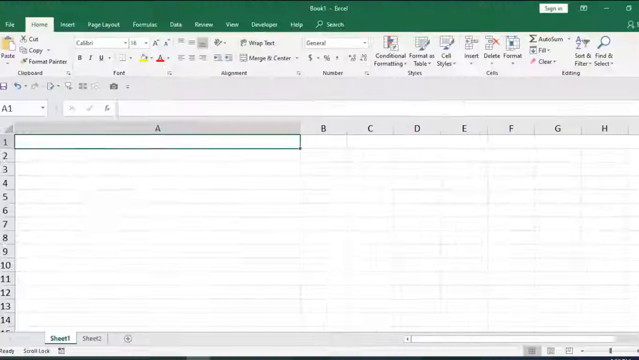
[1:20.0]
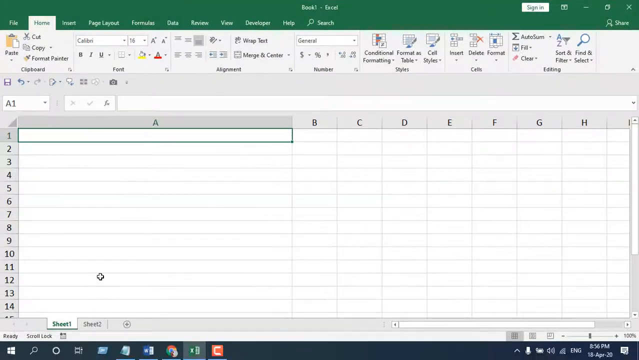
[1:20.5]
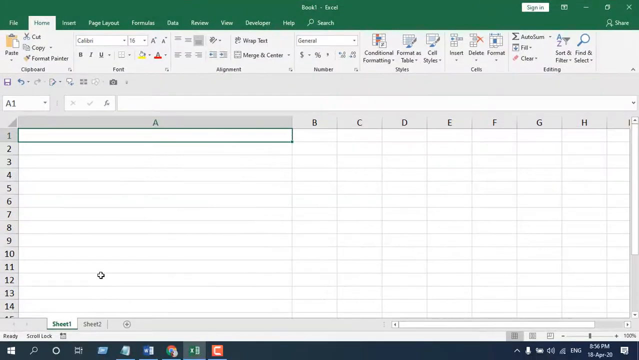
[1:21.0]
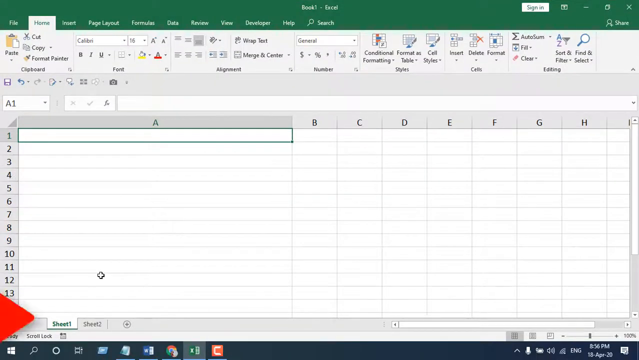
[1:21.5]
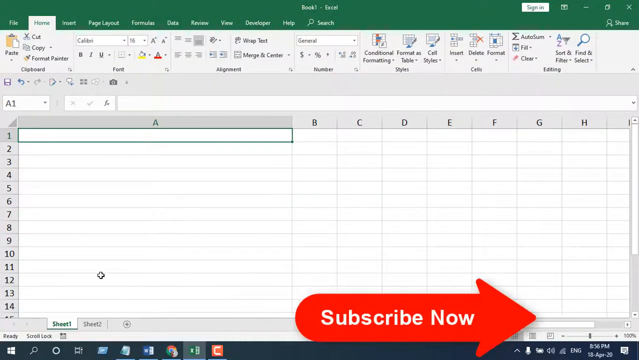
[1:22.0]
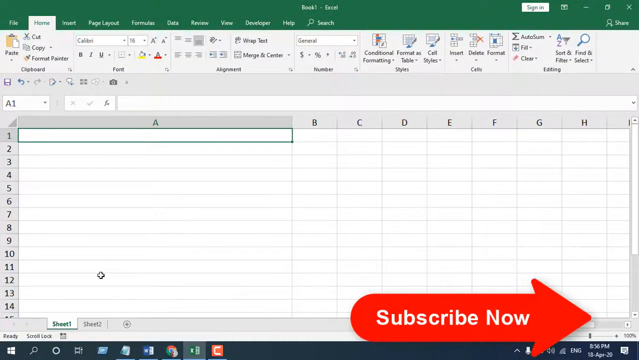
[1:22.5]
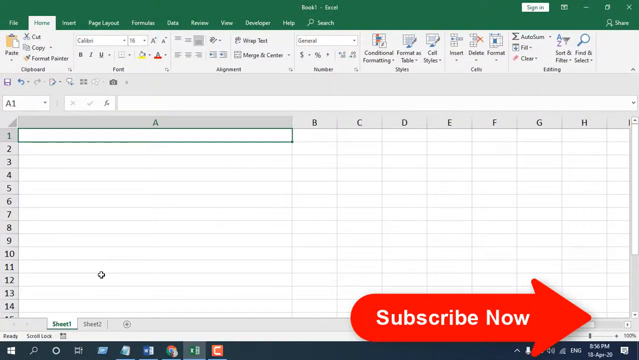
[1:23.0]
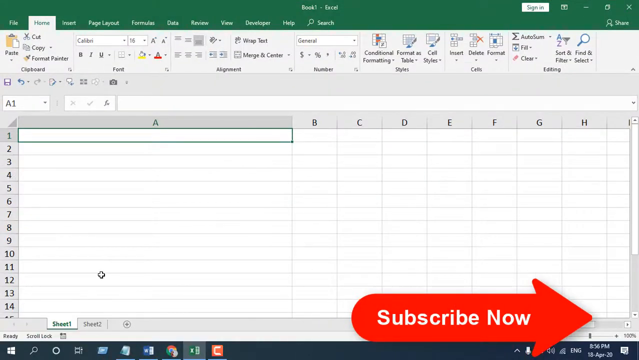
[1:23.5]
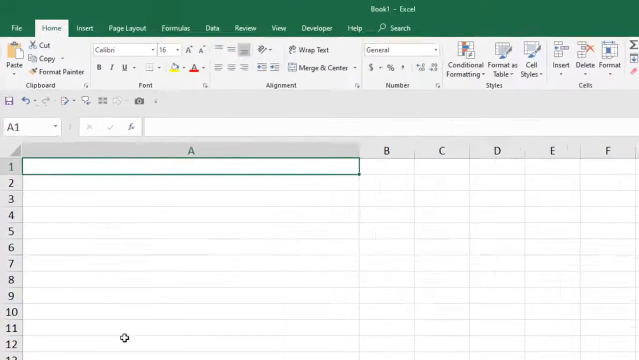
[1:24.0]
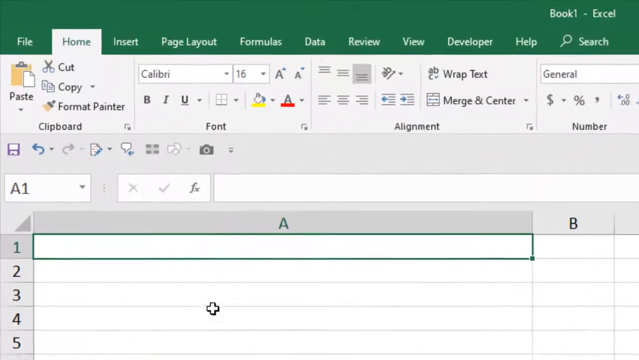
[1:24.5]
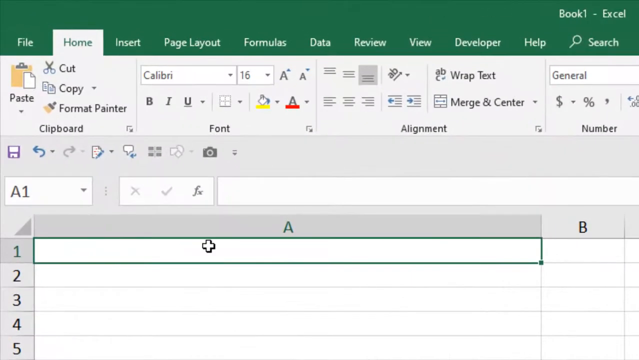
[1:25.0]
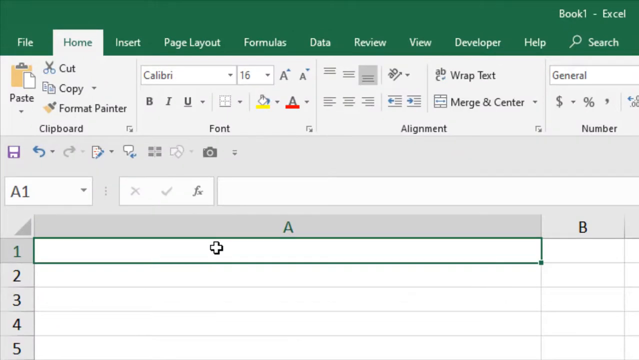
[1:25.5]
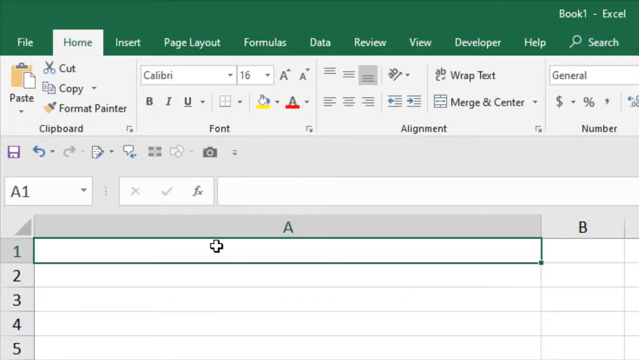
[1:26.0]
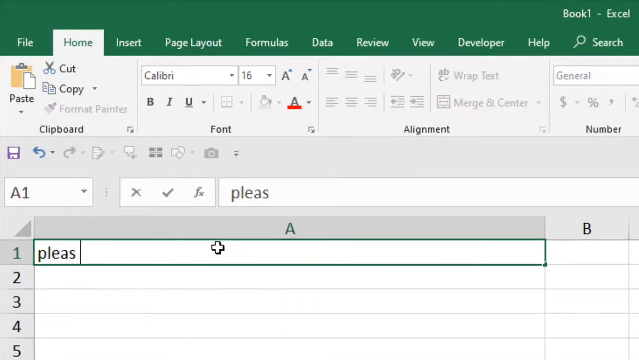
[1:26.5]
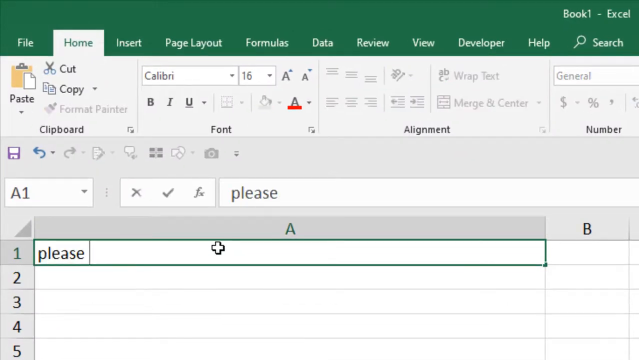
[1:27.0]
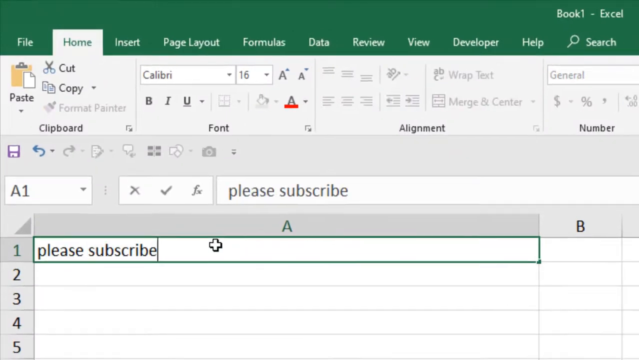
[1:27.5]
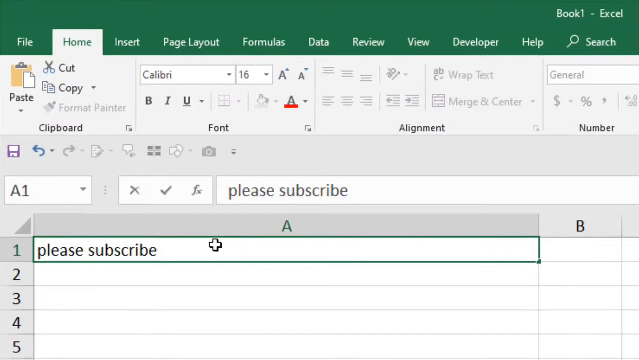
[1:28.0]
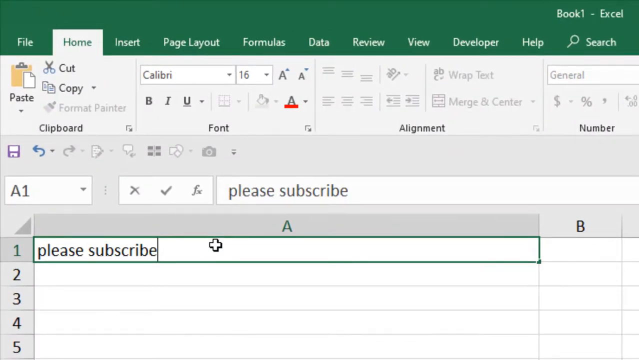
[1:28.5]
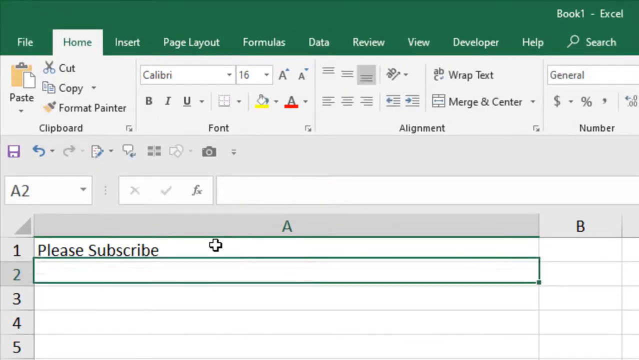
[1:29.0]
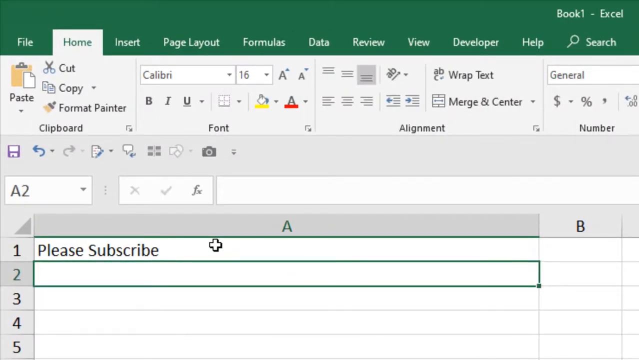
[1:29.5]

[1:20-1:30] The view leaves the code and appears to blink back. At the top right, the X for closing is highlighted in red with a box around it. At the bottom, an animated arrow appears from the left and moves right, reading "subscribe now". It stops for about two seconds, then moves right off the screen. The view zooms in again with the plus-sign cursor, and "please subscribe" is typed in lowercase into cell A1. The selection moves down to A2, which is empty and has a green border.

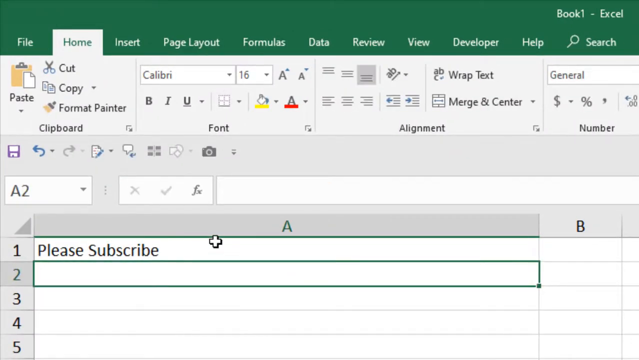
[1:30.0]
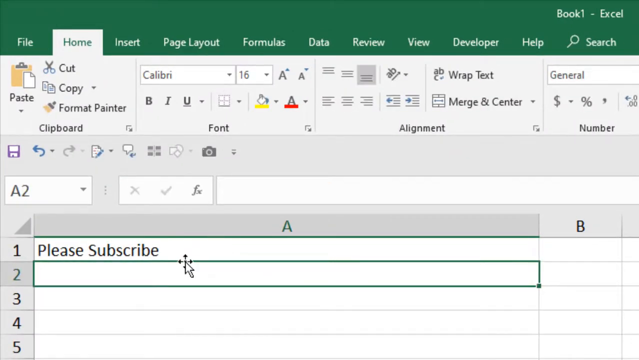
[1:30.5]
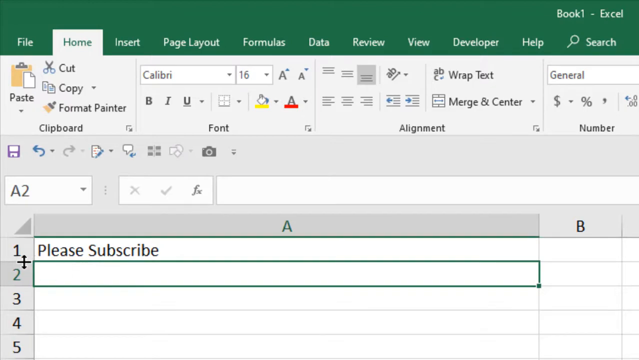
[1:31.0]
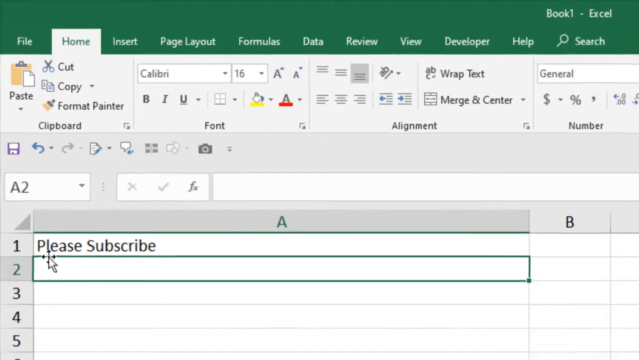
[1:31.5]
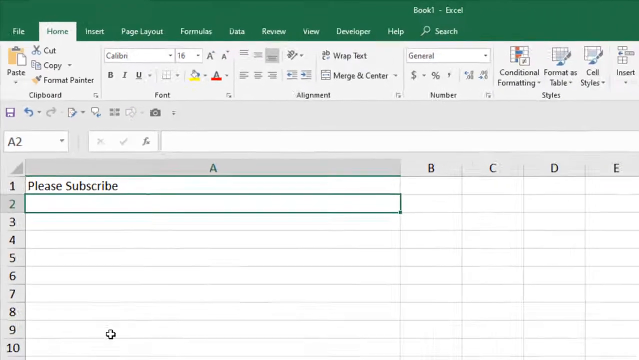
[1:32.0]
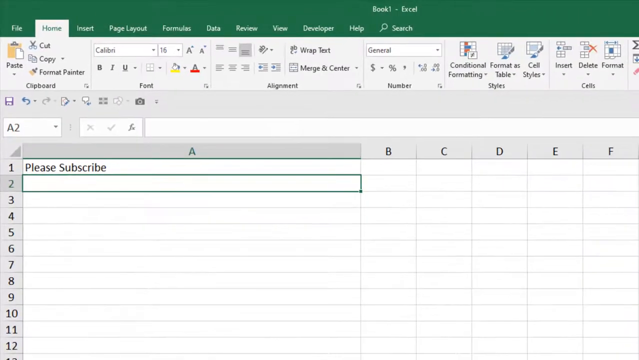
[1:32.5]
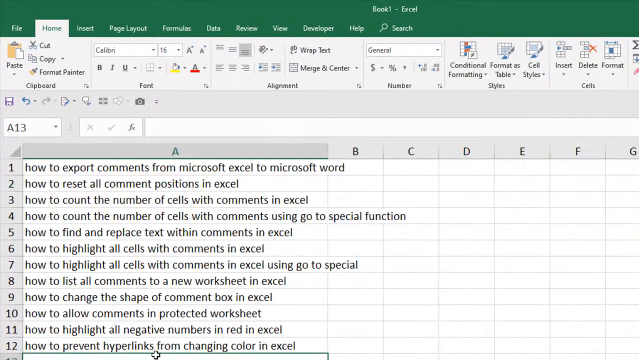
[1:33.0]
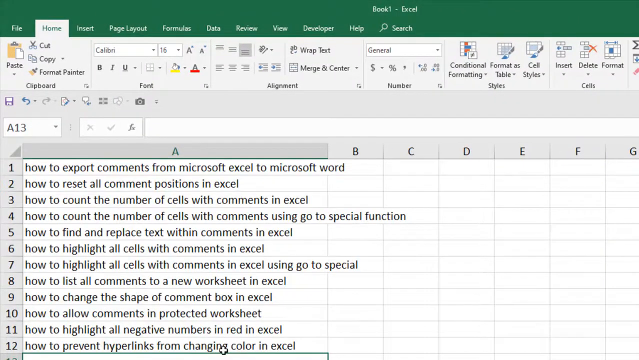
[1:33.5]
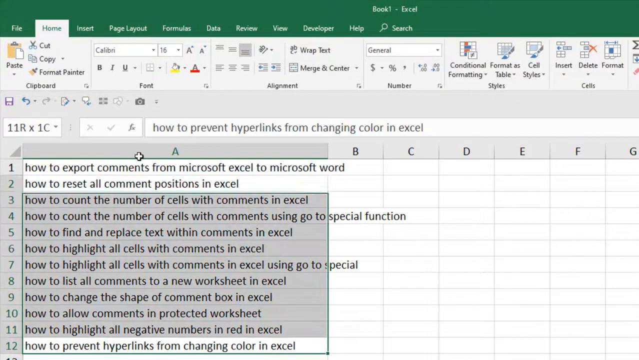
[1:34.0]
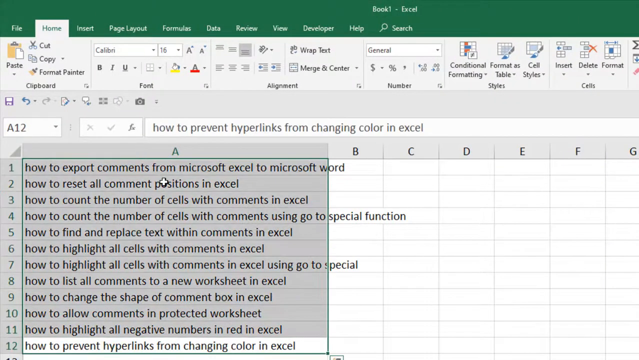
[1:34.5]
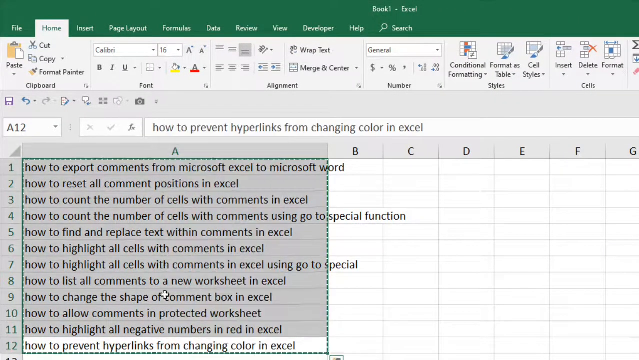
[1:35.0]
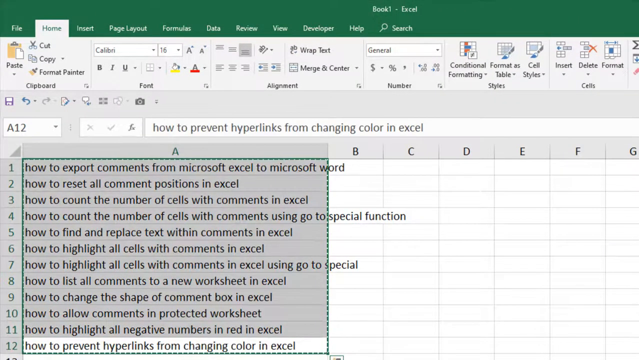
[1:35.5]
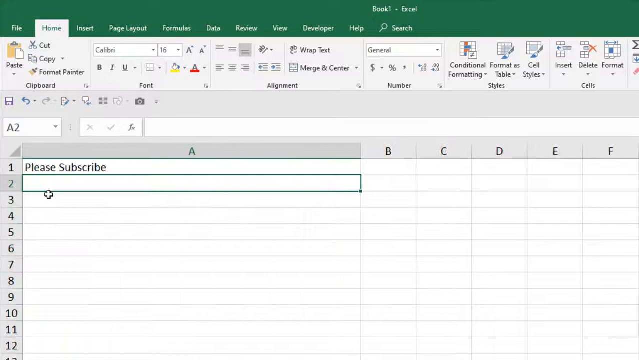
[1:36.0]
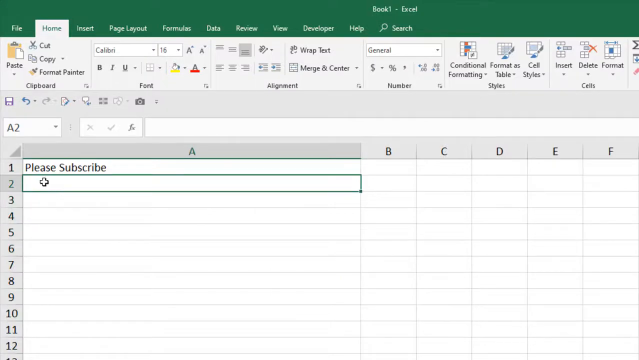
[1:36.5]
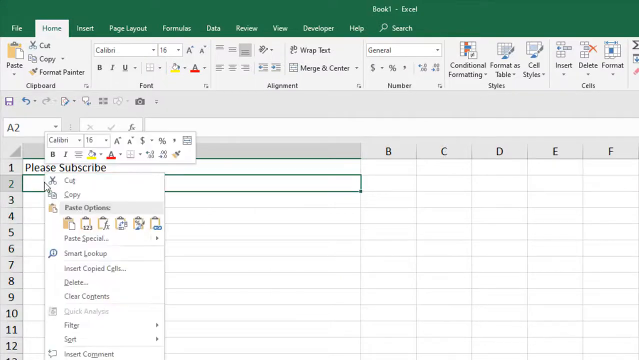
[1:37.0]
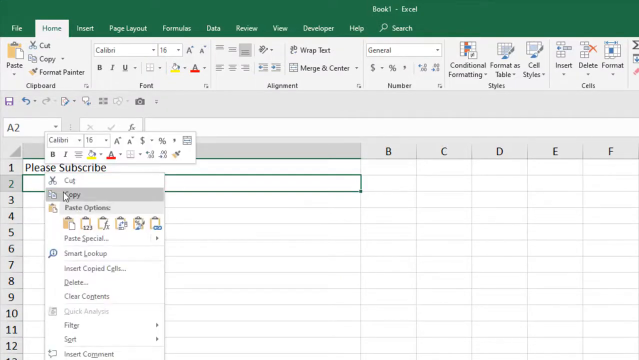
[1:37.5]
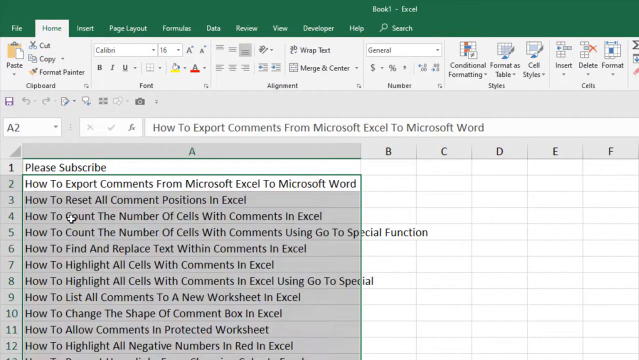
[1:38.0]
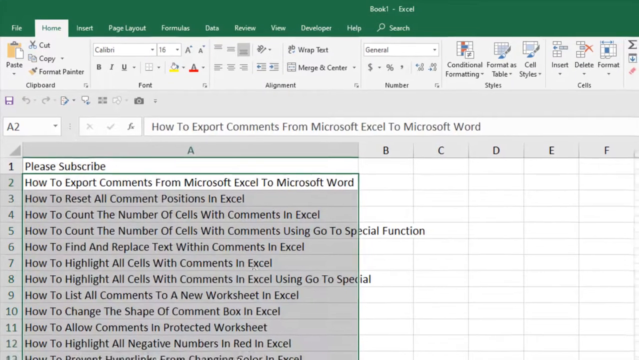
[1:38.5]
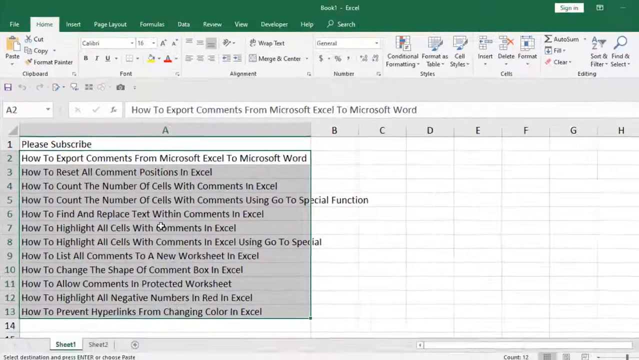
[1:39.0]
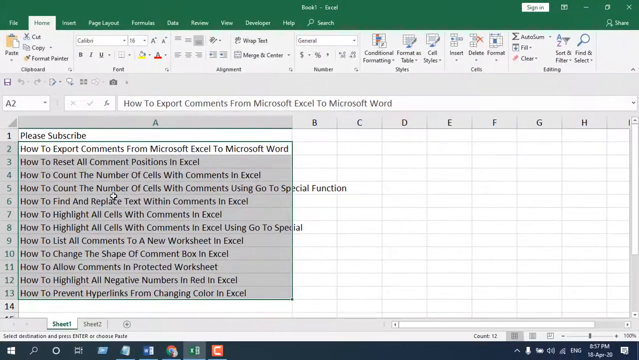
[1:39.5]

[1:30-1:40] Cell A1 shows "please subscribe". The view is zoomed in so far that only A1 through A4 and part of A5 are visible. Column A is very wide, column B is normal width, and only part of column C is visible, without its letter. The view zooms out slightly, and a list of entries is pasted into the column: A1 says "how to export comments", A2 says "how to reset", and the list continues, with A11 saying "how to highlight all negative numbers in red in excel". The cells are highlighted, then right-clicked, and a list pops up, apparently paste options. An option is clicked, and an animated dotted line, like little ants, moves around the highlighted green border.